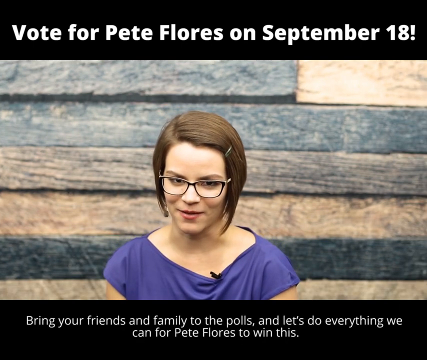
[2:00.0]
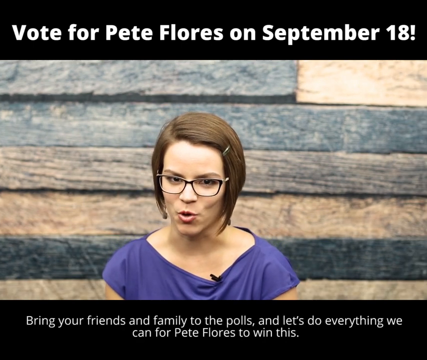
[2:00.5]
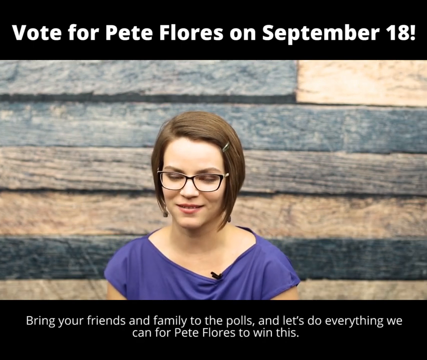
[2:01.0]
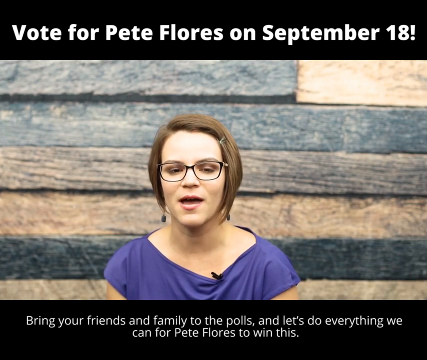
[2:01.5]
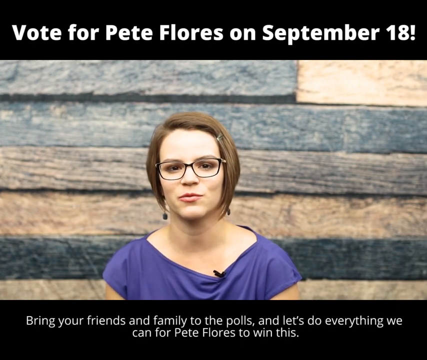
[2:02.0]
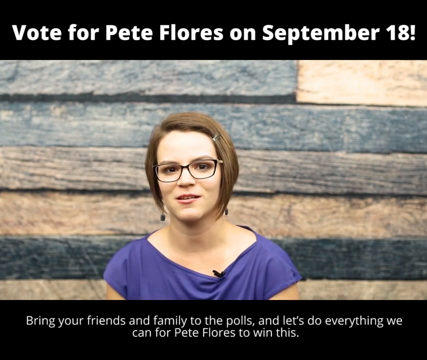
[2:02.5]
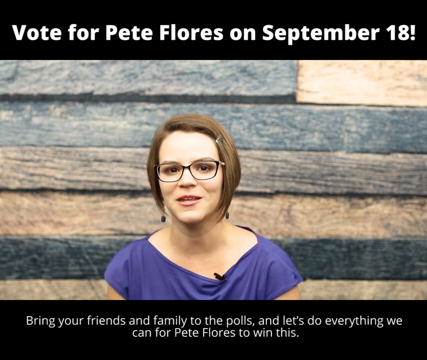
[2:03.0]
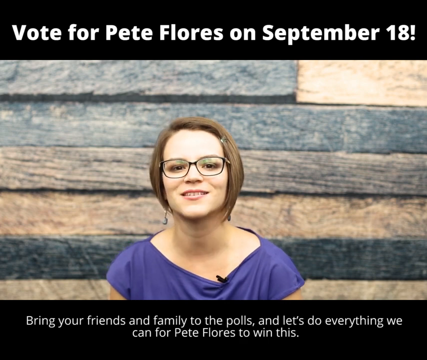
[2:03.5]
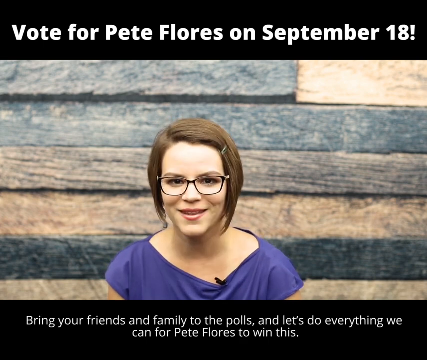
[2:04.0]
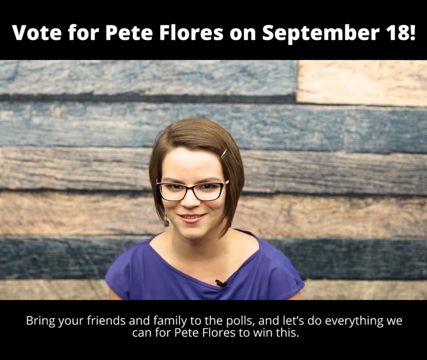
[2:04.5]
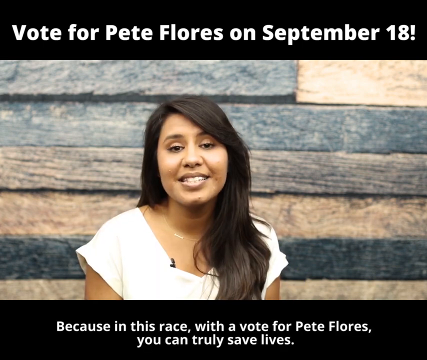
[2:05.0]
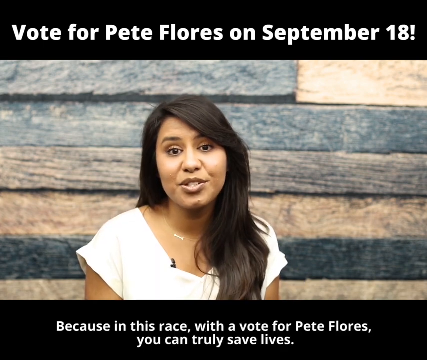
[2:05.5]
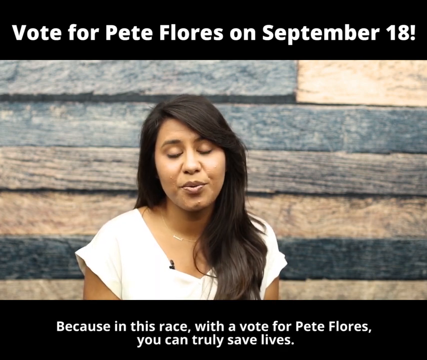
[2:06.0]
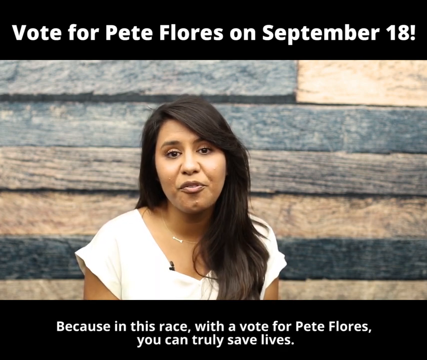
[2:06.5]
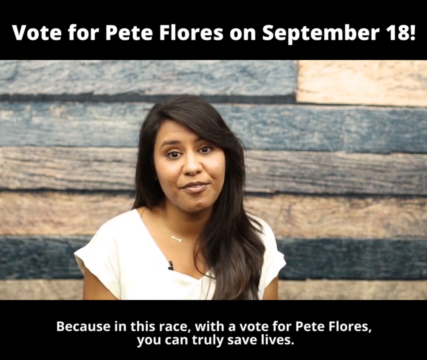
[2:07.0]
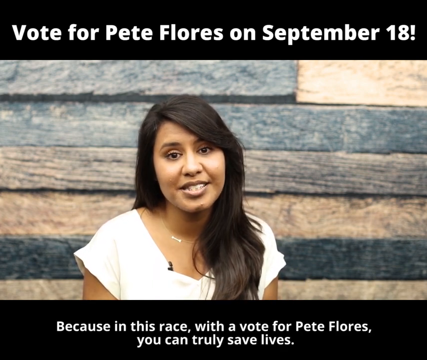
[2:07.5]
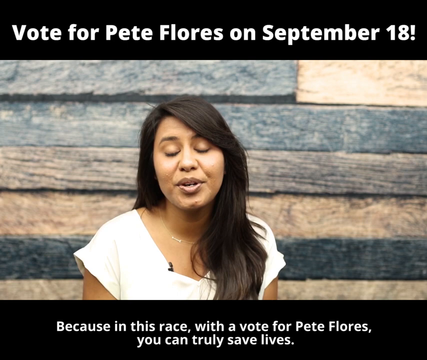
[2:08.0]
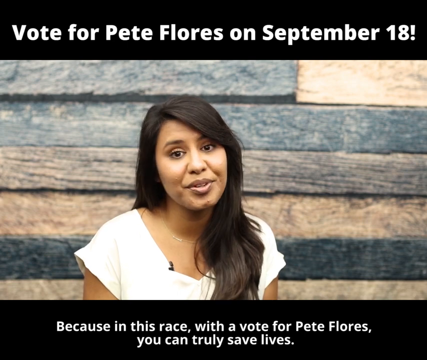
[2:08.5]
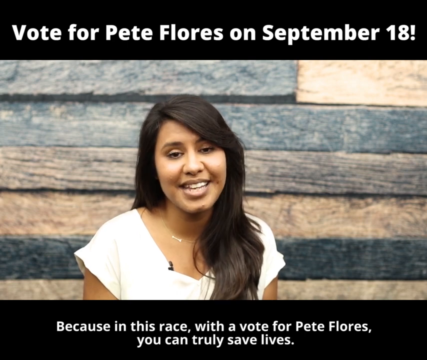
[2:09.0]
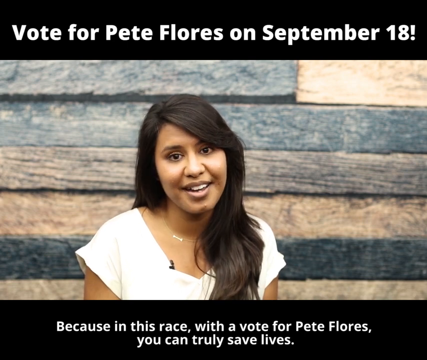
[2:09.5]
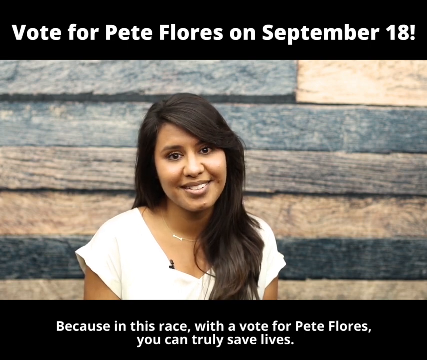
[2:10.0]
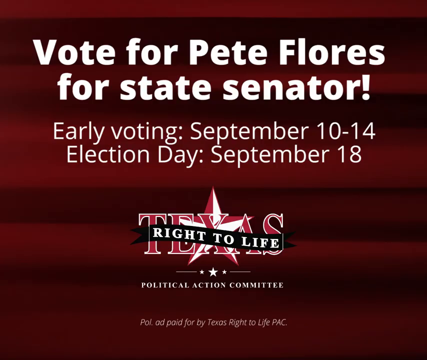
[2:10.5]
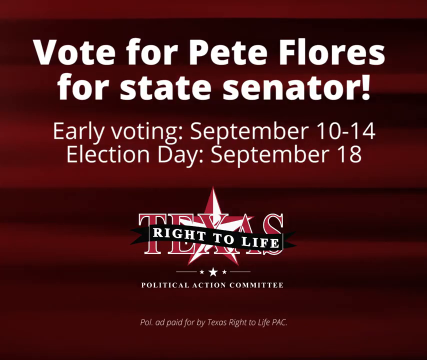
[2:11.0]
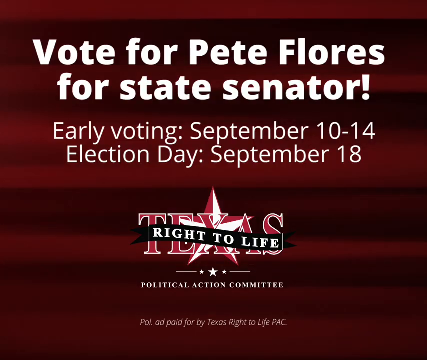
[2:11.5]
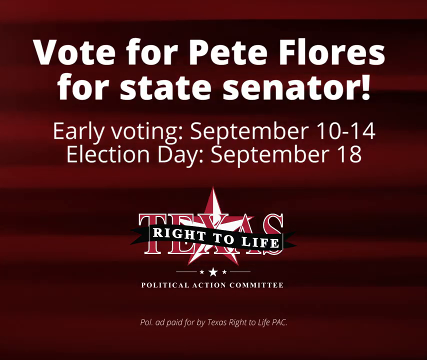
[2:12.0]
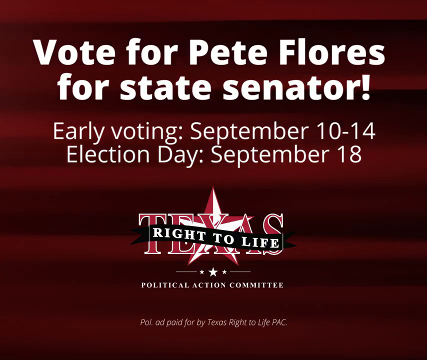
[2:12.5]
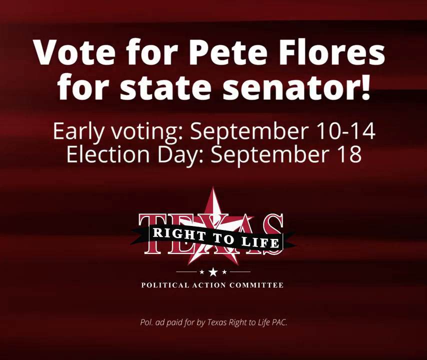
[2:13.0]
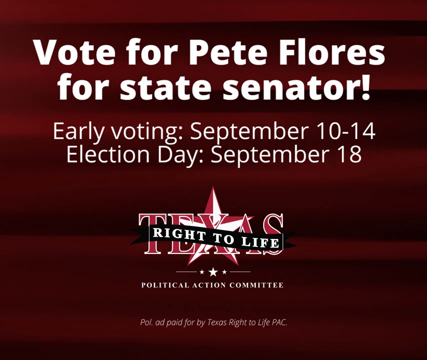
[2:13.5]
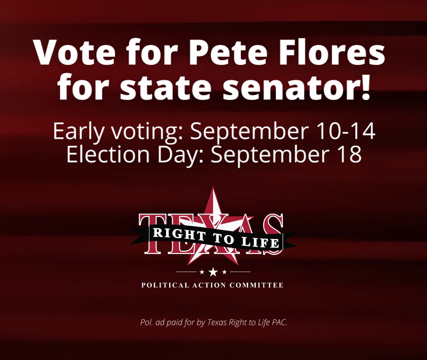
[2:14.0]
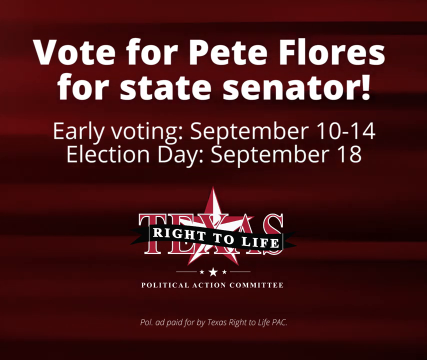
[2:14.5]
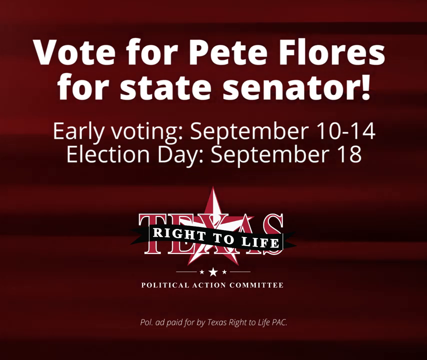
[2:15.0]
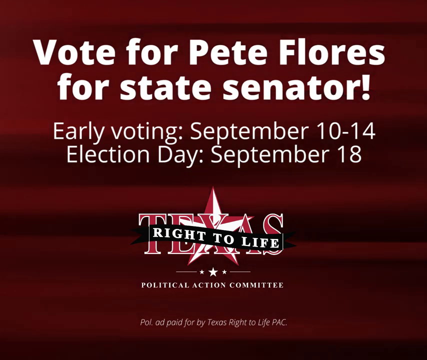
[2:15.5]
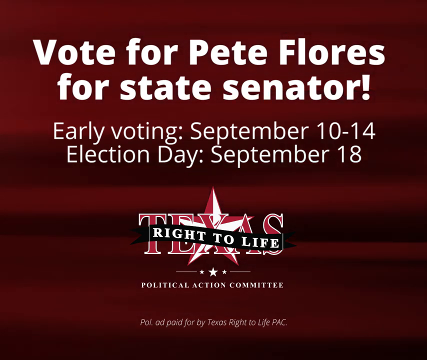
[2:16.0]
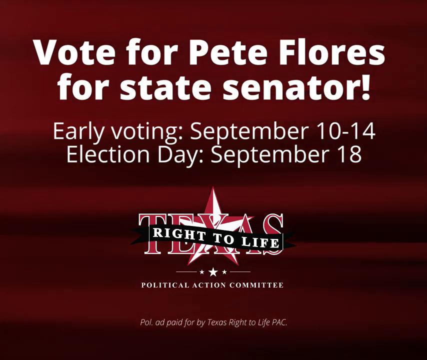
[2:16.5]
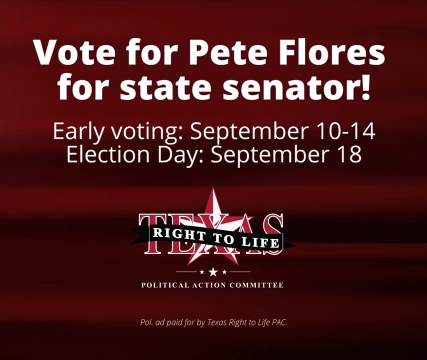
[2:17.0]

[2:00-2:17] A young woman with short brown hair, black-rimmed glasses and a blue short-sleeved t-shirt stands in front of the camera against a background of wooden slats running horizontally across the wall. She has a microphone attached to the front of her top and a small hair clip in her hair. Above her head are the words "Vote for Pete Flores on September the 18th", and underneath her the words "Bring your friends and family to the polls and let's do everything we can for Pete Flores to win this." The view changes to another woman with long black hair swept onto one side of her shoulder, wearing a white t-shirt; the words underneath her say "Because in this race, with a vote for Pete Flores, you could truly save lives." A banner then comes up with the words "Vote for Pete Flores for State Senator. Early voting, September 10th to 14th. Election day, September 18th." This is followed by a Texas Right to Life icon with the words "Political Action Committee" underneath it, apparently the organisation that produced the video.